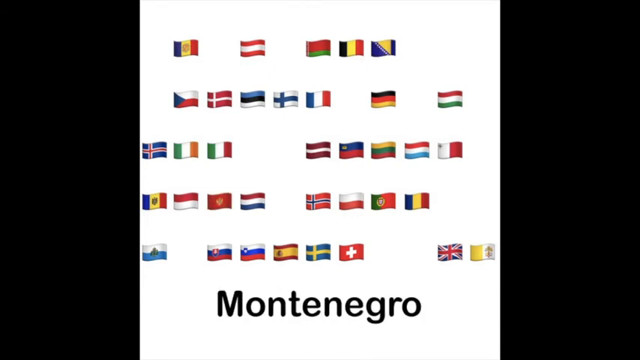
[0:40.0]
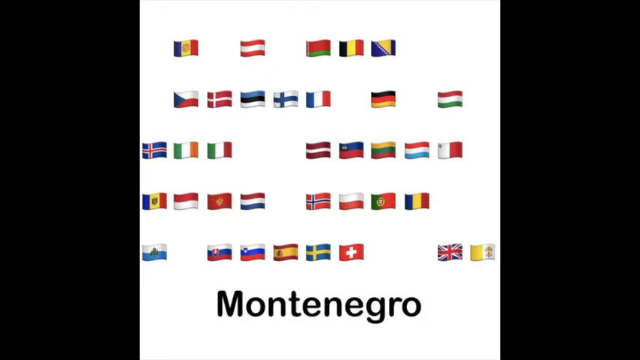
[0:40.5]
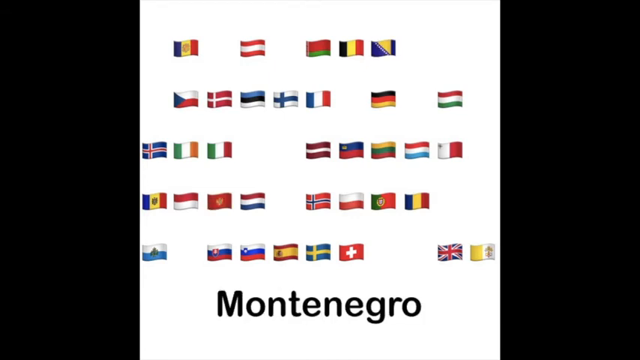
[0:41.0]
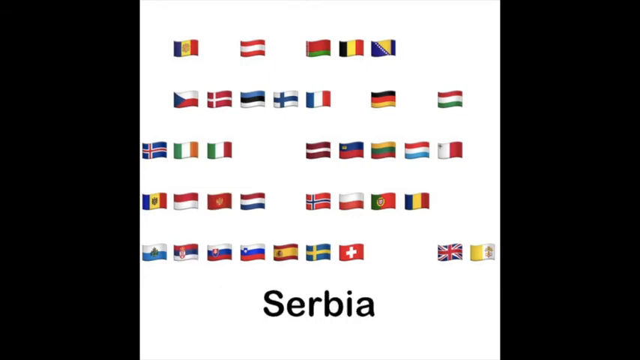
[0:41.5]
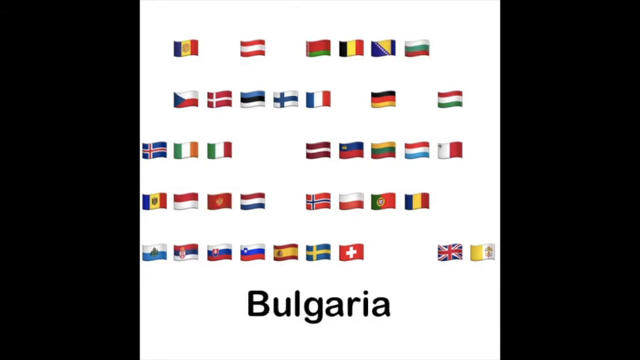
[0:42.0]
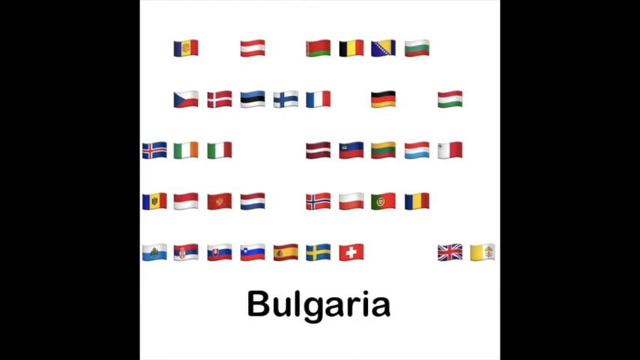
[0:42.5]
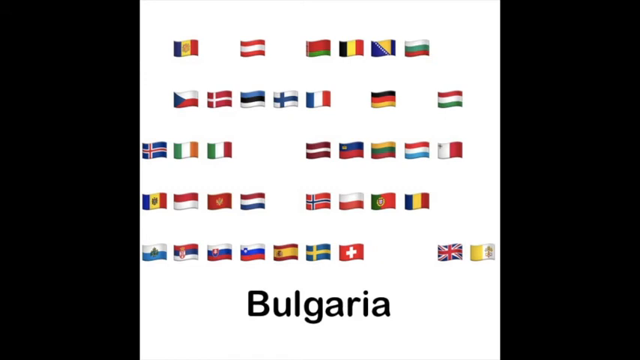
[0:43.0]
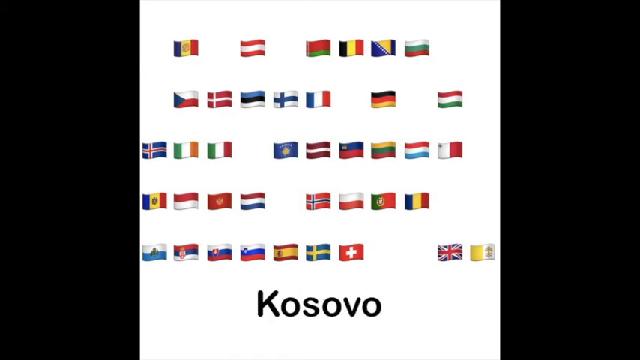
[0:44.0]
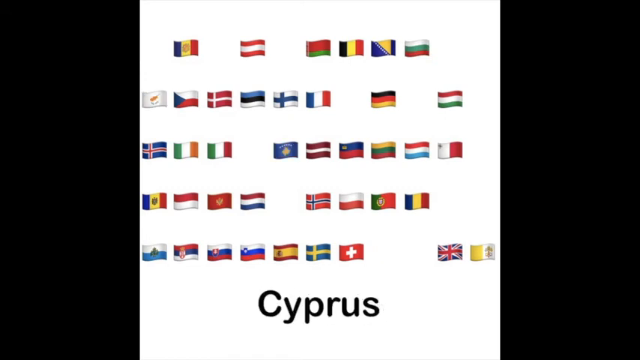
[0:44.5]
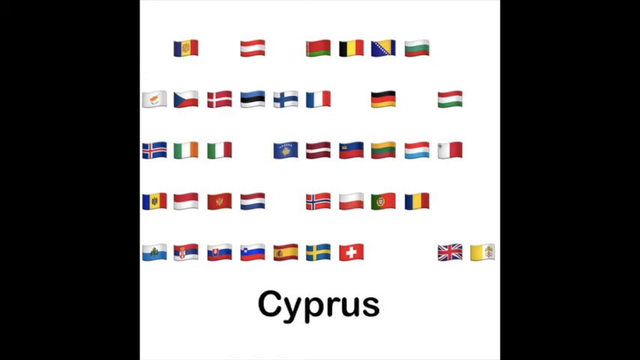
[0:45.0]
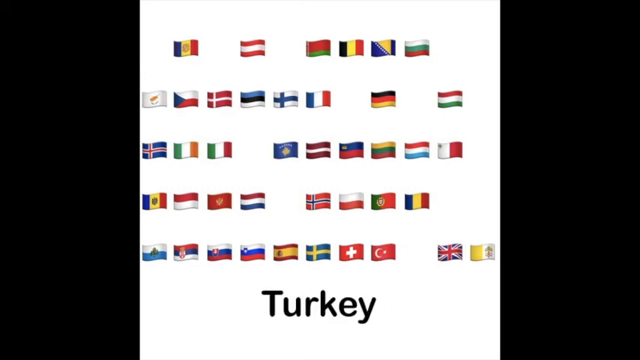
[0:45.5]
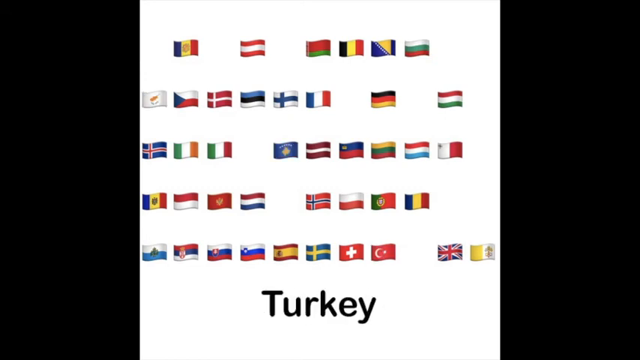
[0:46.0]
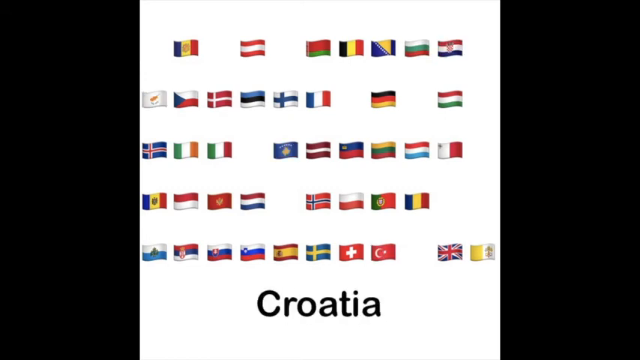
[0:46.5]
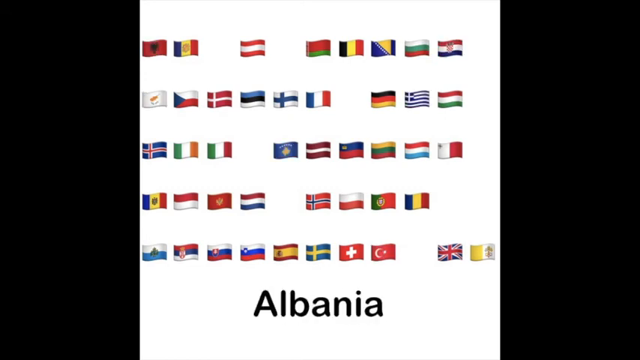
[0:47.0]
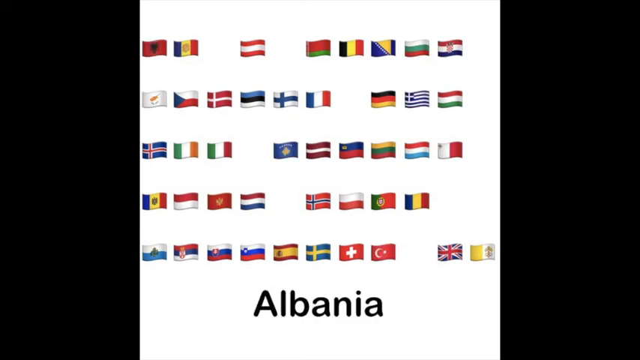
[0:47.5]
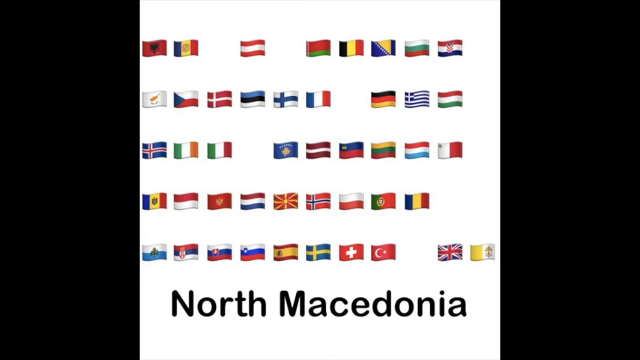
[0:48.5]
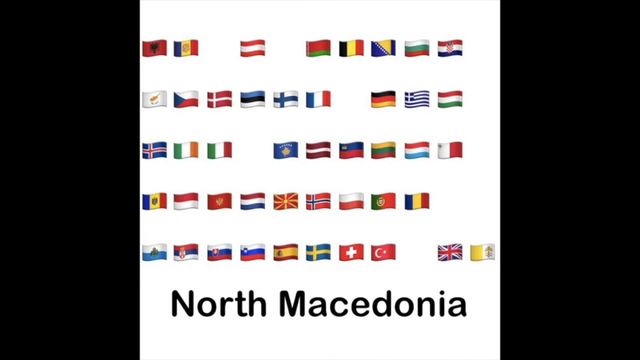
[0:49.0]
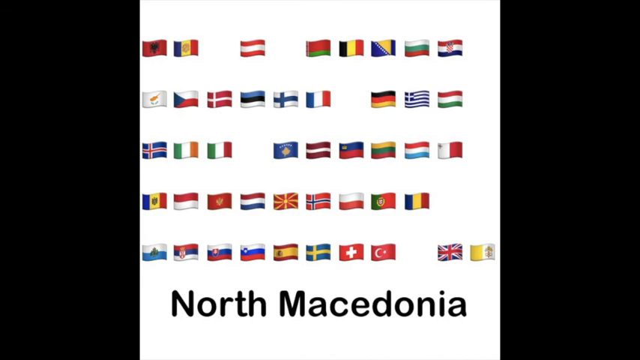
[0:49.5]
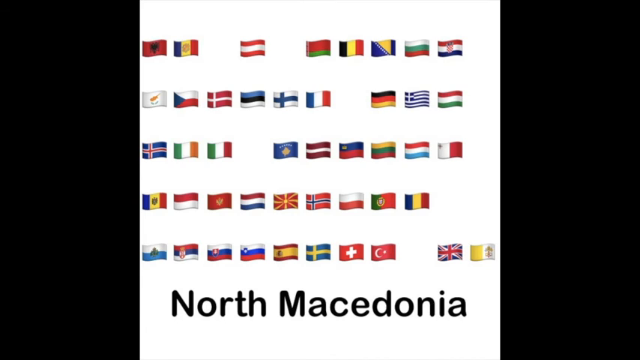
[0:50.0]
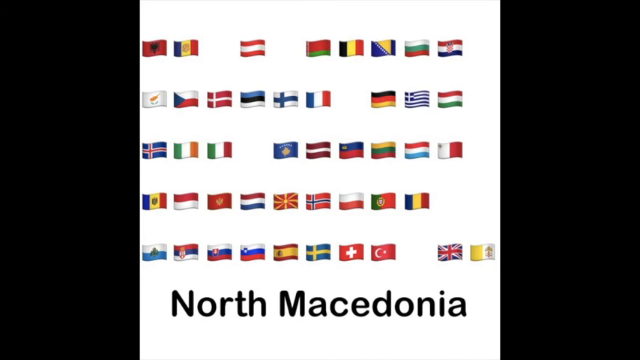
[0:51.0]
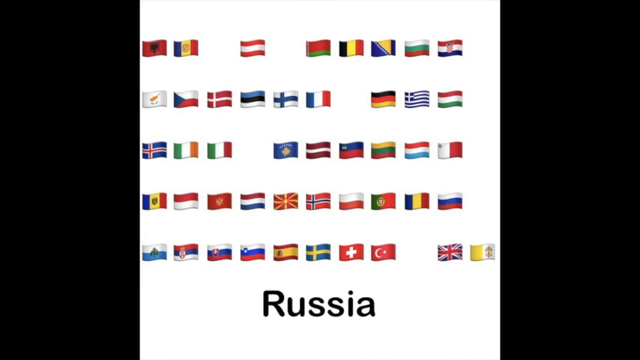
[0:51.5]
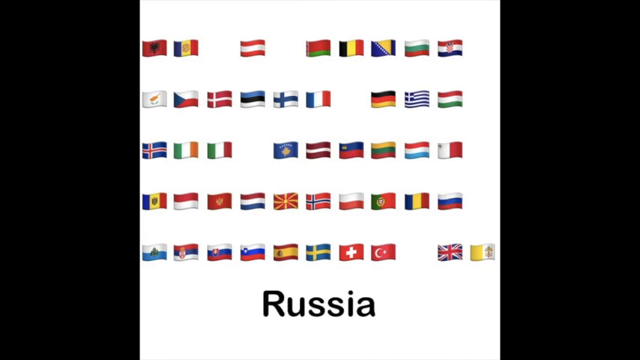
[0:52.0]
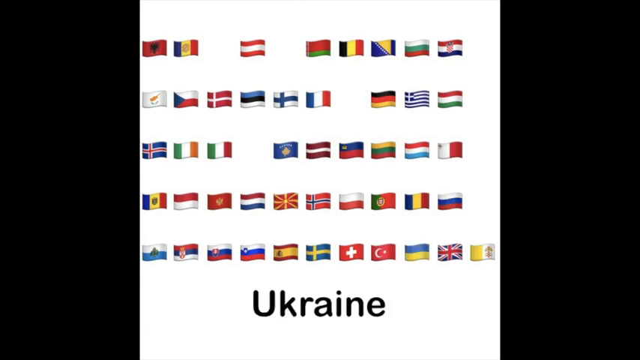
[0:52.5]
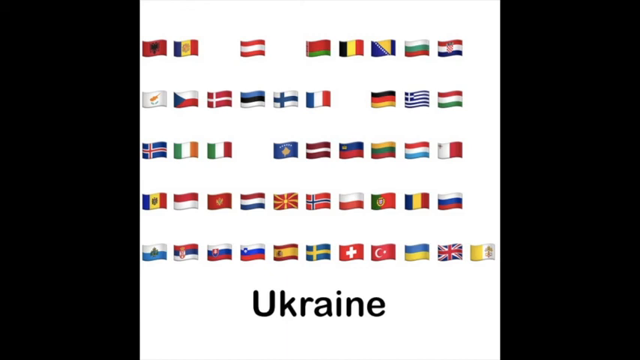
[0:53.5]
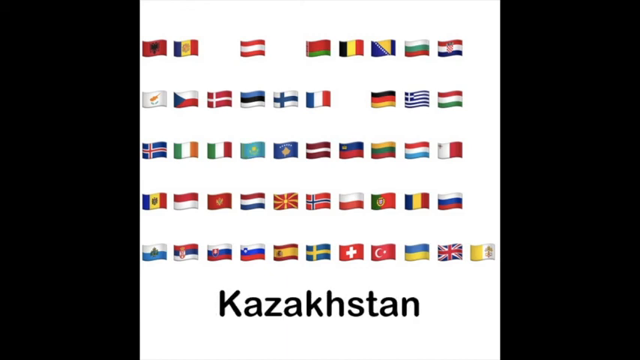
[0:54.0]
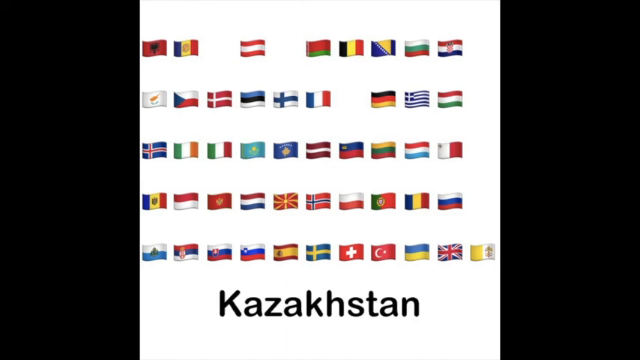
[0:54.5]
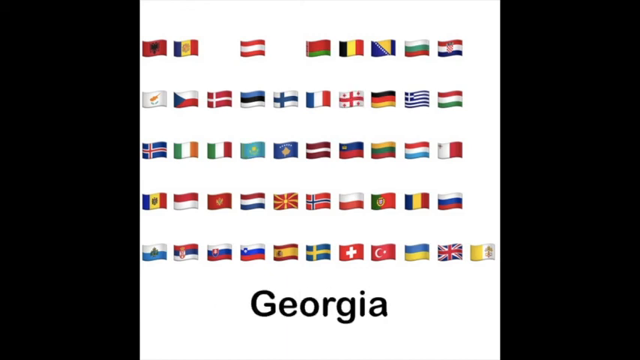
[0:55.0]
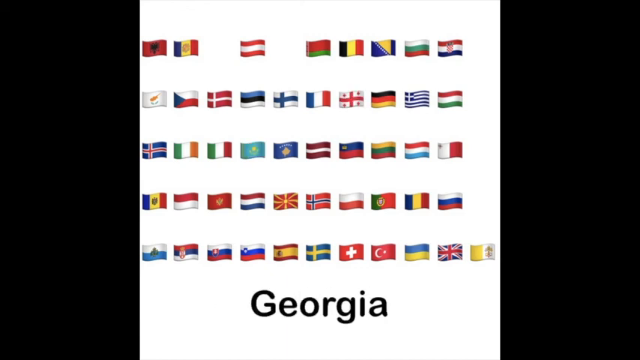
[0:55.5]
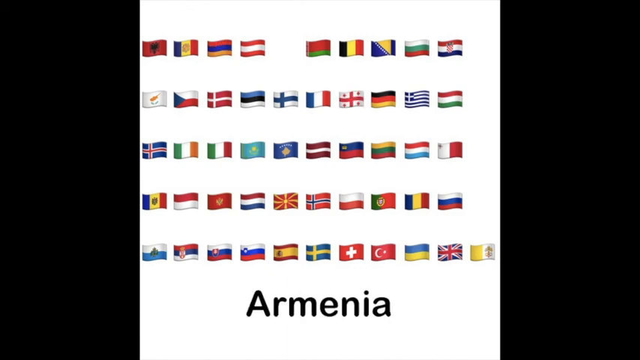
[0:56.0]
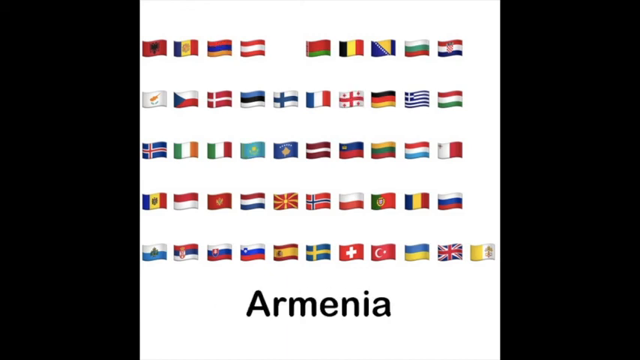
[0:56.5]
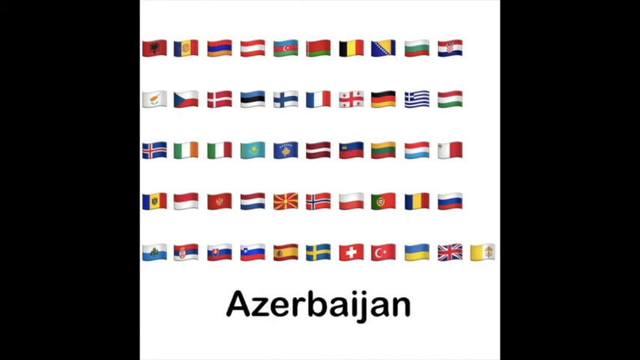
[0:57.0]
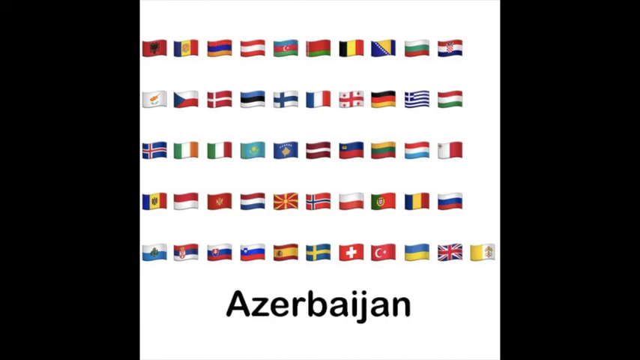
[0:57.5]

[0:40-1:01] Many national flags, about 37, are on the screen. Another one is added, Bulgaria, followed by Kosovo, Cyprus, Turkey, Croatia, Greece, Albania, North Macedonia, Russia, Ukraine, Kazakhstan, Georgia, Armenia, and Azerbaijan. The flags are unique and very colorful, scattered all over the screen, and the country name shows at the bottom whenever a flag is added. In the end there are 51 national flags on the screen in total, arranged in five rows: the first four rows have 10 flags each and the fifth row has 11.